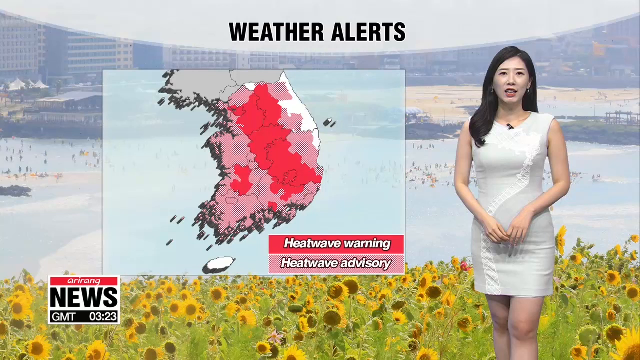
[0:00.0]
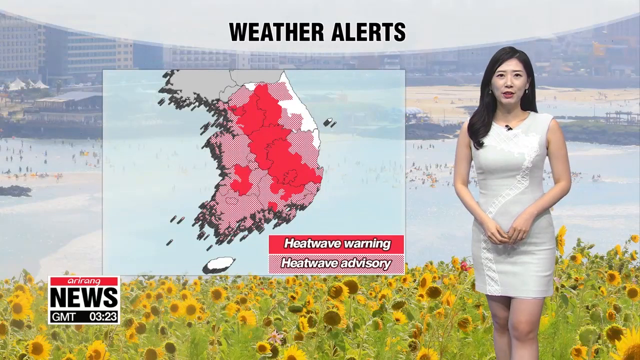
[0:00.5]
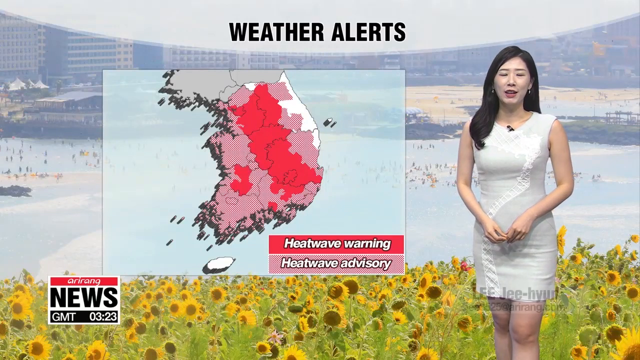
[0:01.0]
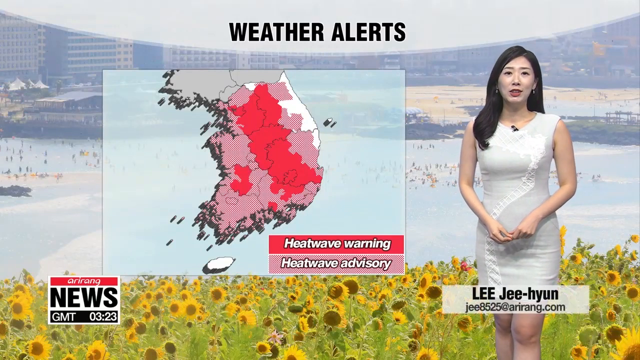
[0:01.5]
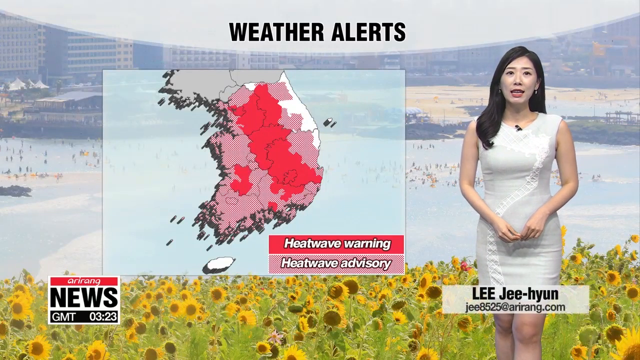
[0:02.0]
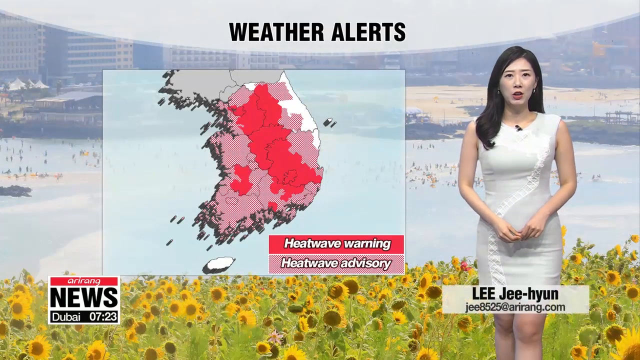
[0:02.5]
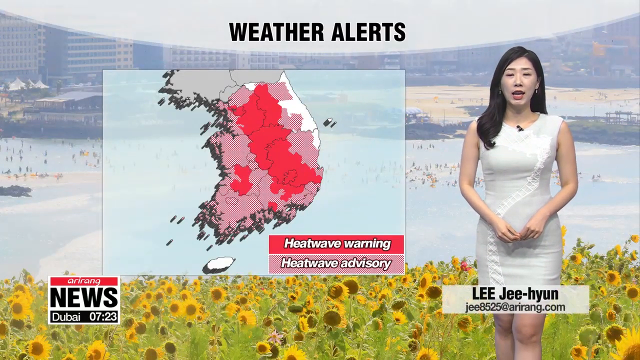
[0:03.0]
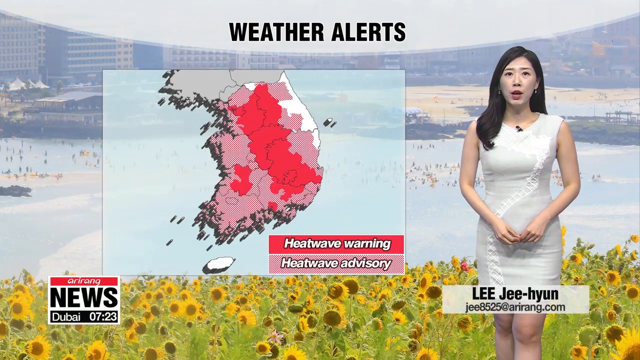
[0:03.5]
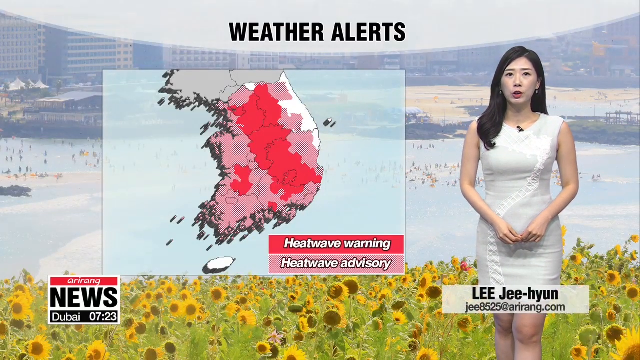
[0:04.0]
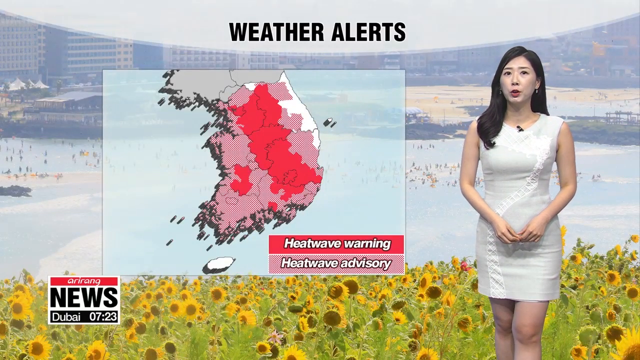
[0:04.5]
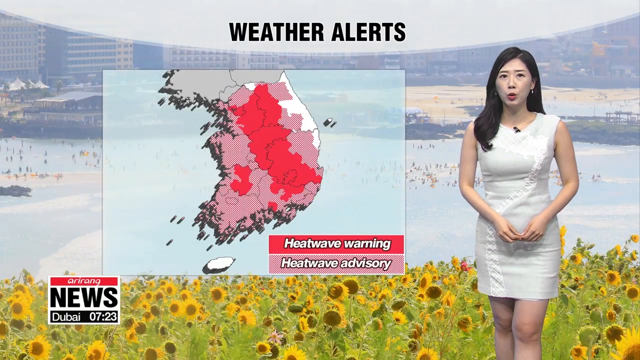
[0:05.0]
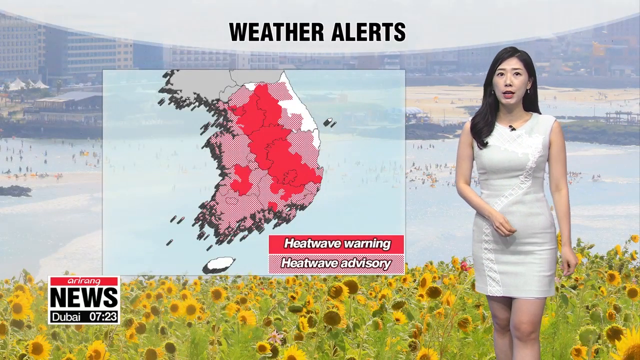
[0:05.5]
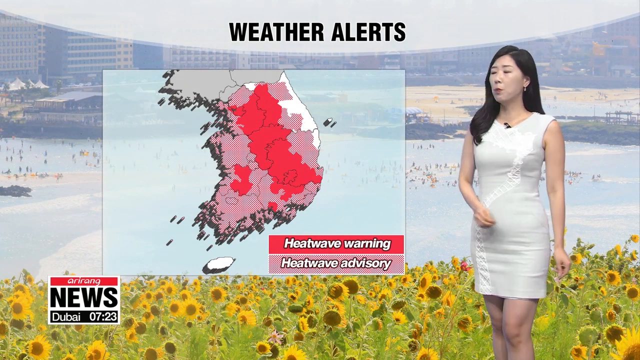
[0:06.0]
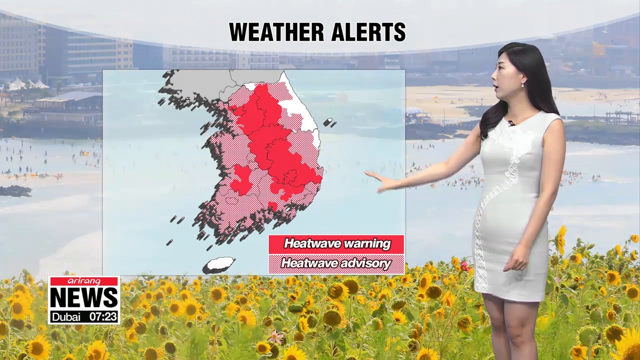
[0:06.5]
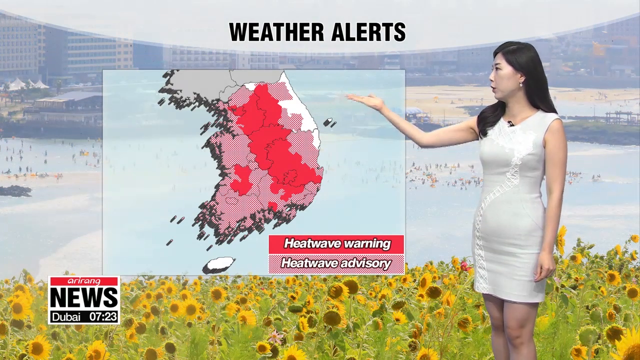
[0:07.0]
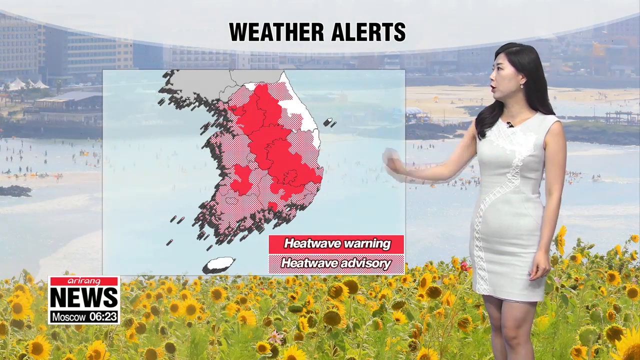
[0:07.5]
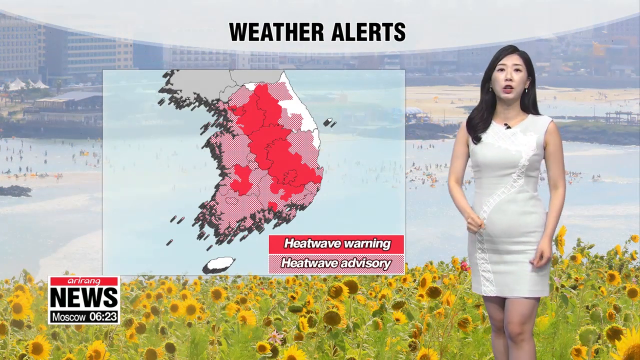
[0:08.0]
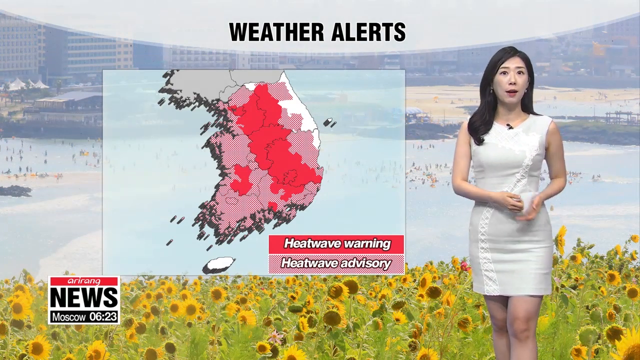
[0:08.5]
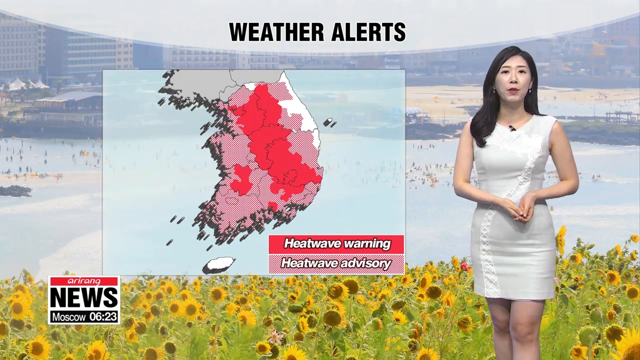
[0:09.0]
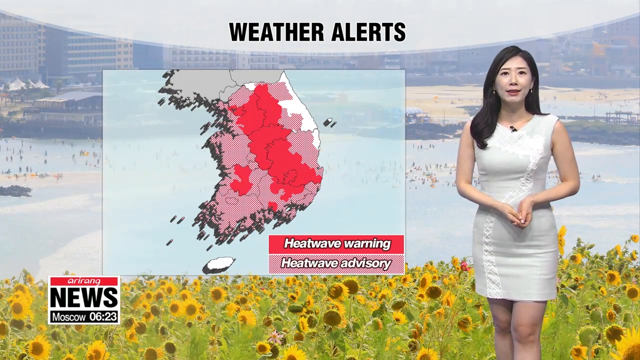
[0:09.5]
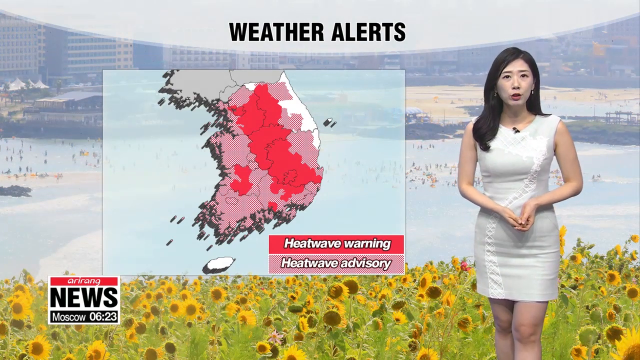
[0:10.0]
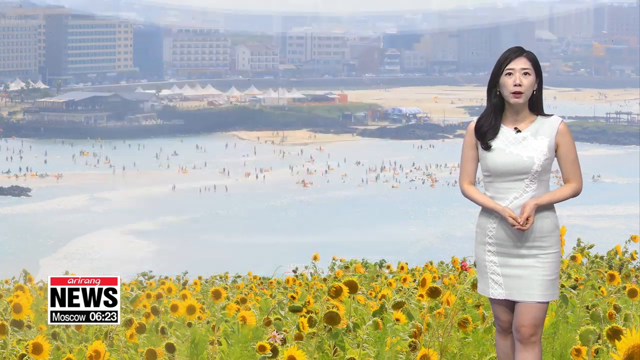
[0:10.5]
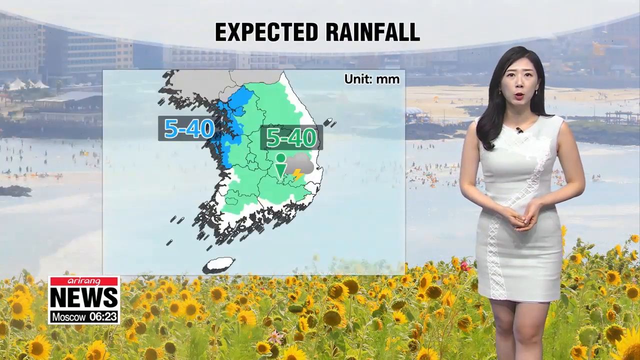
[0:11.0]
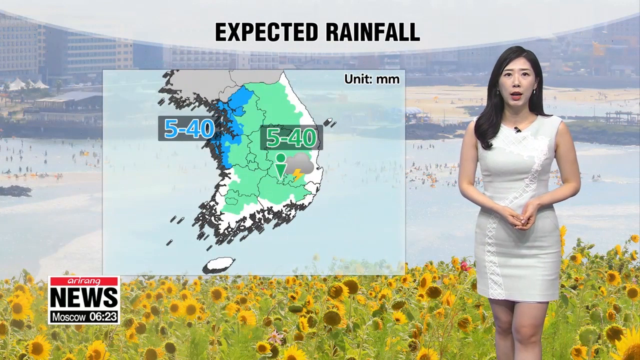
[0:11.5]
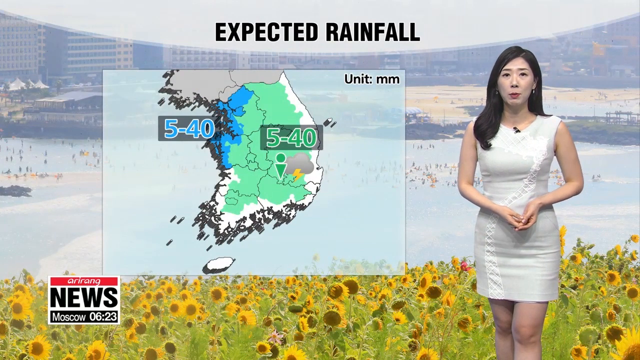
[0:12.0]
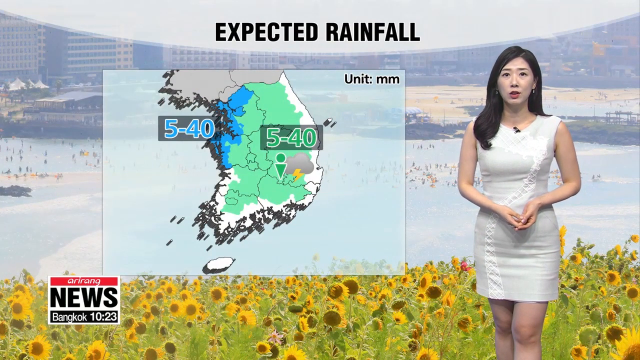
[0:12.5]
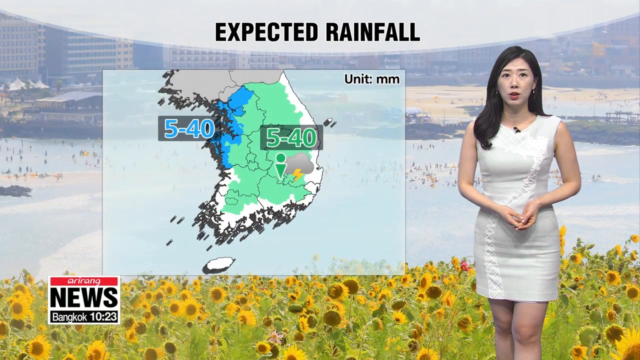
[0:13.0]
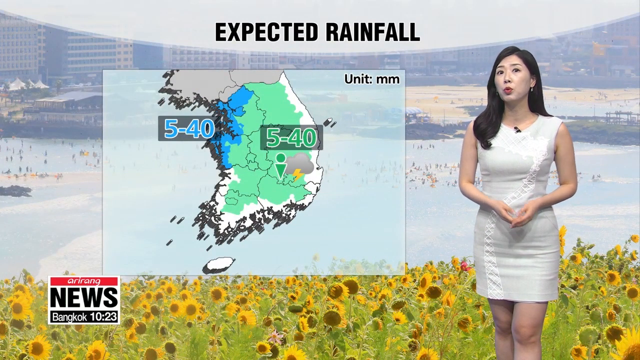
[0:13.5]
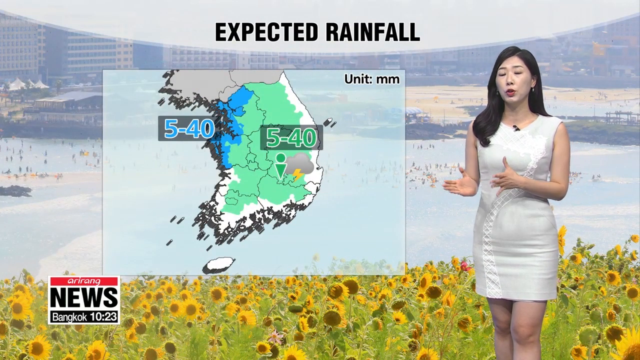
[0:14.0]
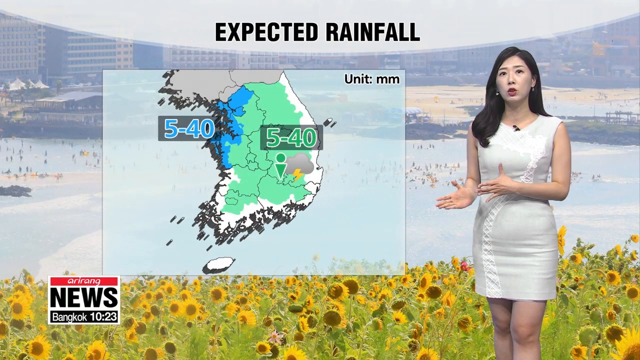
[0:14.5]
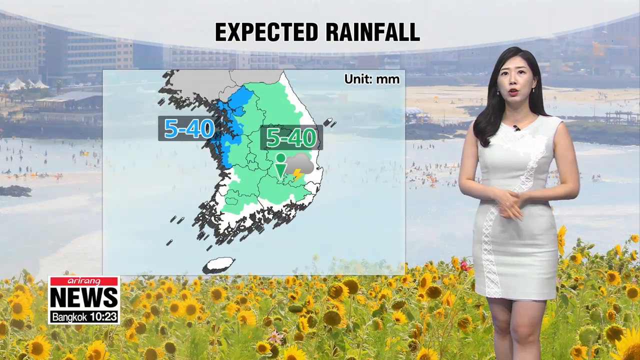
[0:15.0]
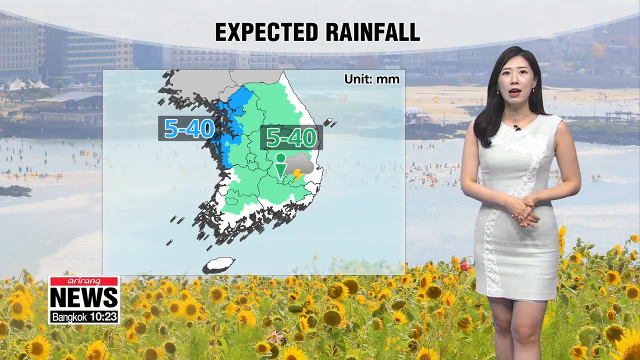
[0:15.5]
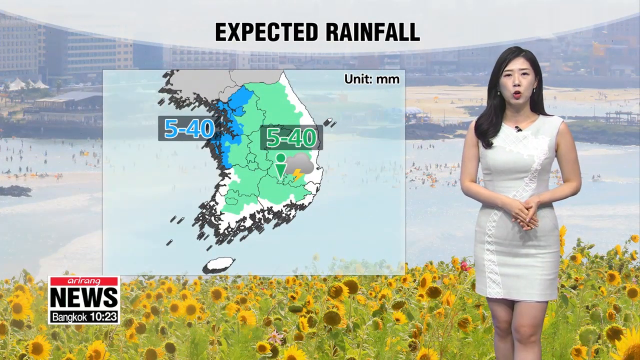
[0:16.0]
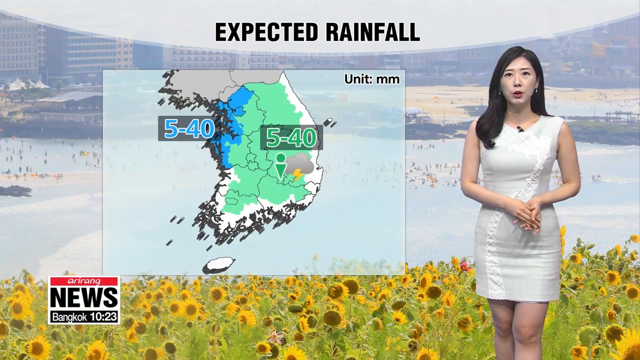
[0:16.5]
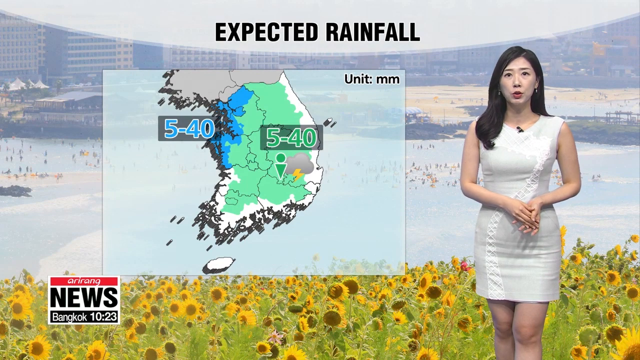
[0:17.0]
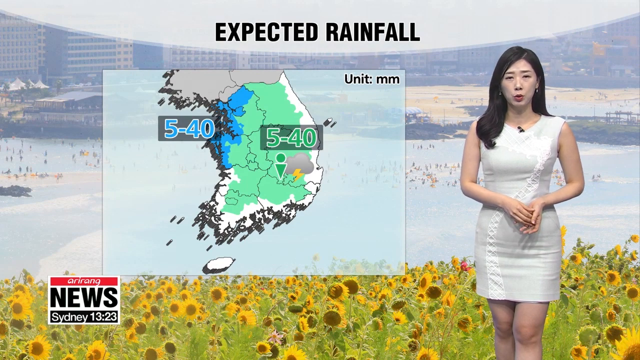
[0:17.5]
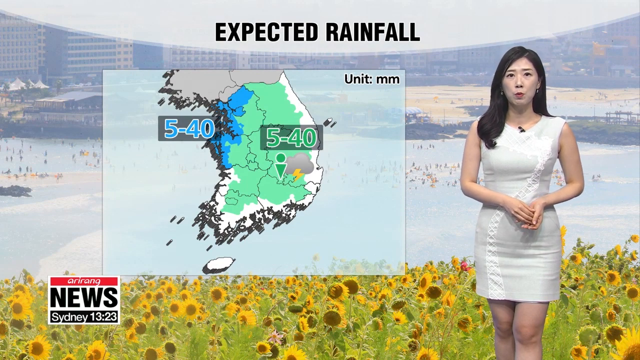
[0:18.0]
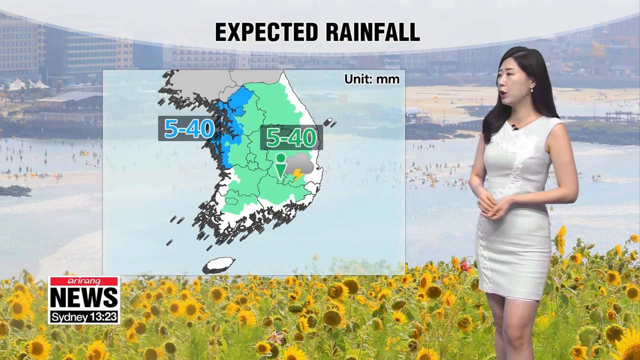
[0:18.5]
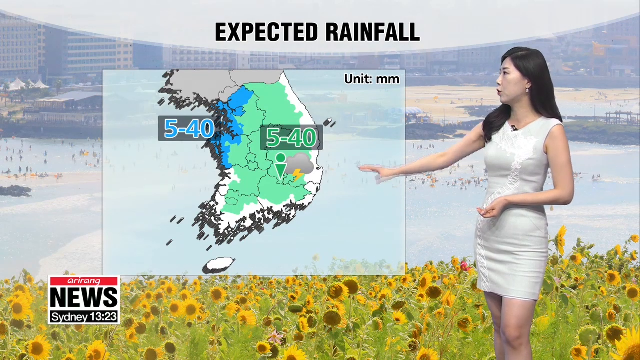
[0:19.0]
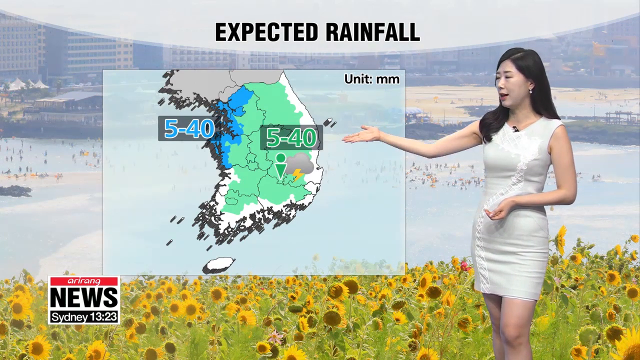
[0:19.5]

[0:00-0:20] The background is a photograph: buildings in the far background, then a beach, then a water area with sandbars, and a field of sunflowers in the foreground. Across the top is a white semicircle serving as a text background, with "weather alerts" centered in black text. In the center of the screen is a map with color-coded counties or regions: red regions are heatwave warning and pink regions are heatwave advisory. At the bottom of the map area, a text box with a red background and white writing reads "heatwave warning", and below it a text box with a pink background and white text reads "heatwave advisory". On the right side of the screen, a woman in a white dress with short sleeves stands with her hands in front of her, discussing the map. She then gestures to the map with her right arm extended.